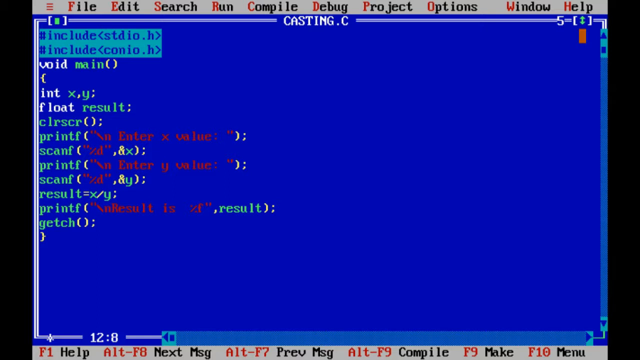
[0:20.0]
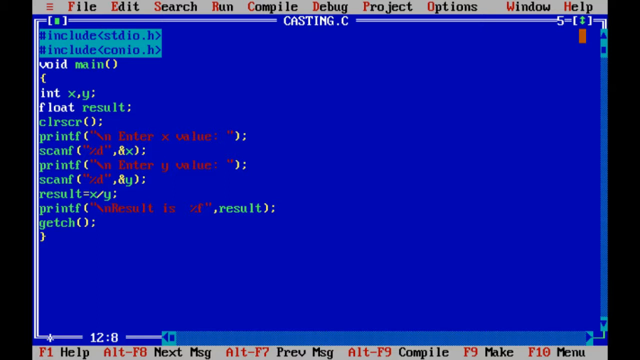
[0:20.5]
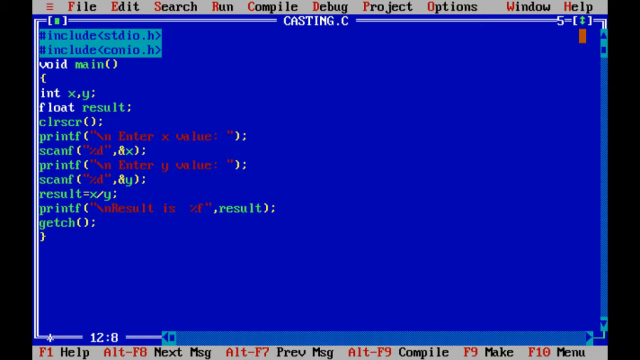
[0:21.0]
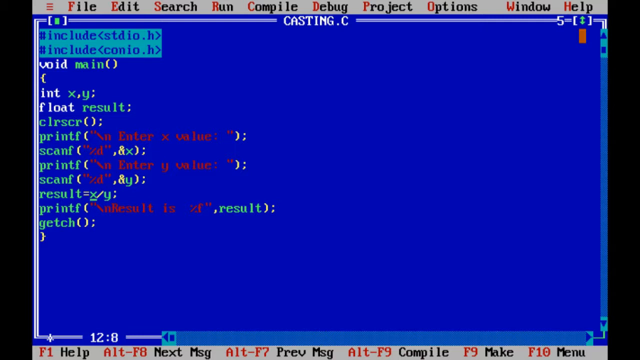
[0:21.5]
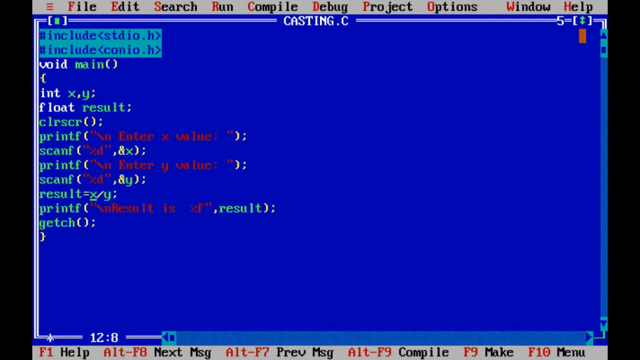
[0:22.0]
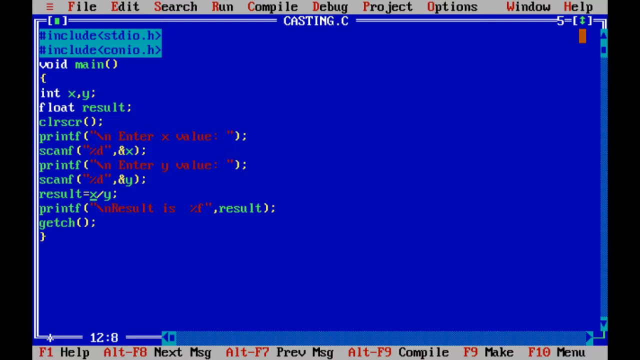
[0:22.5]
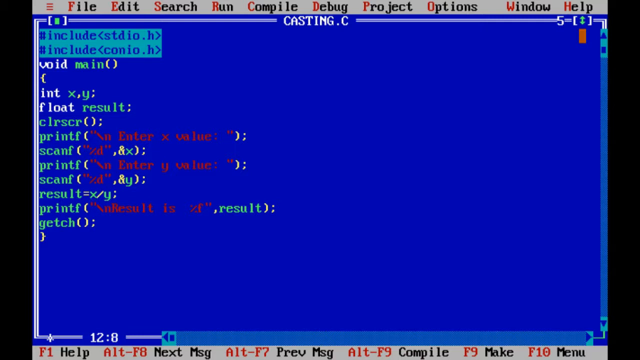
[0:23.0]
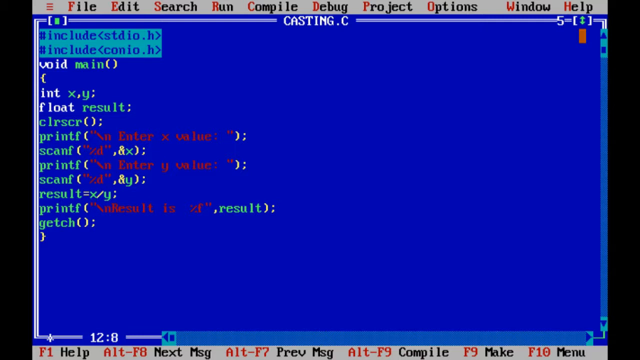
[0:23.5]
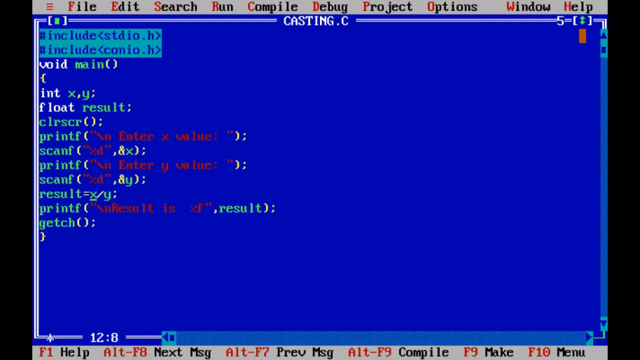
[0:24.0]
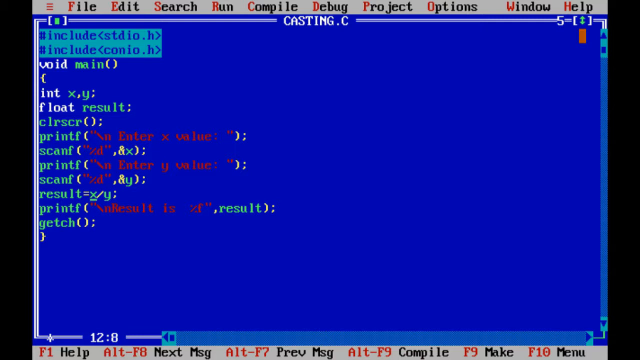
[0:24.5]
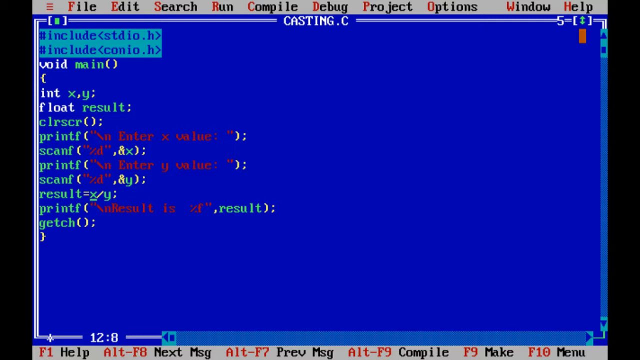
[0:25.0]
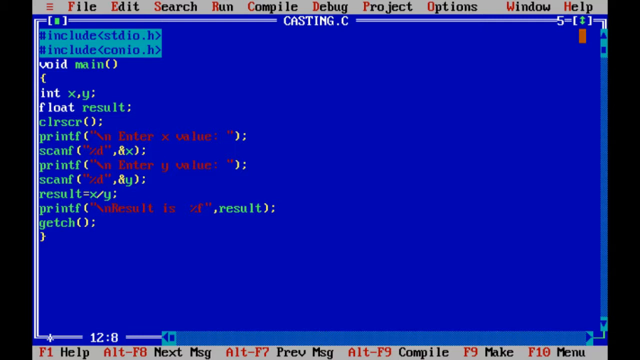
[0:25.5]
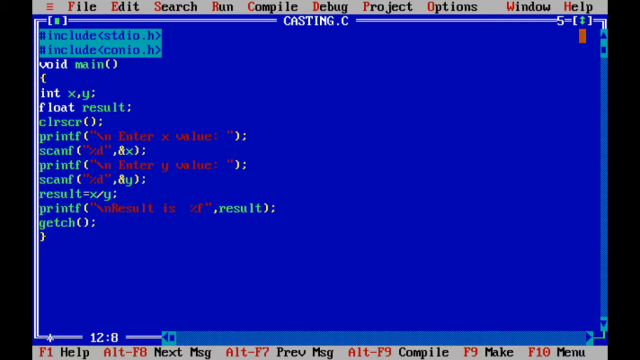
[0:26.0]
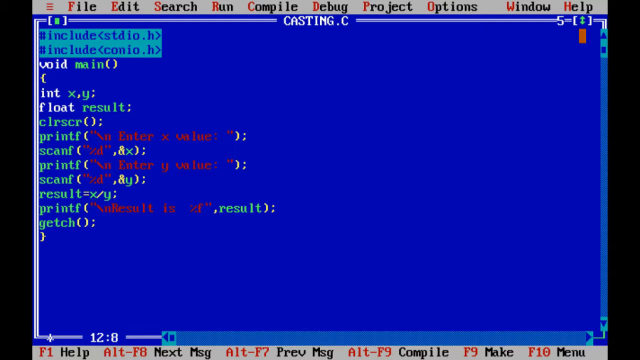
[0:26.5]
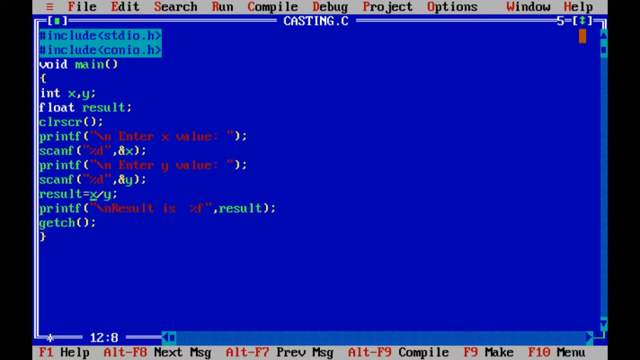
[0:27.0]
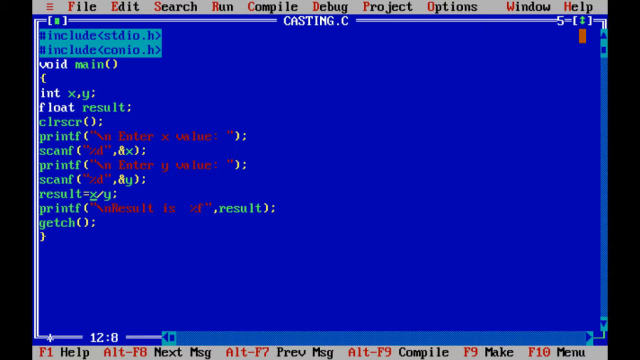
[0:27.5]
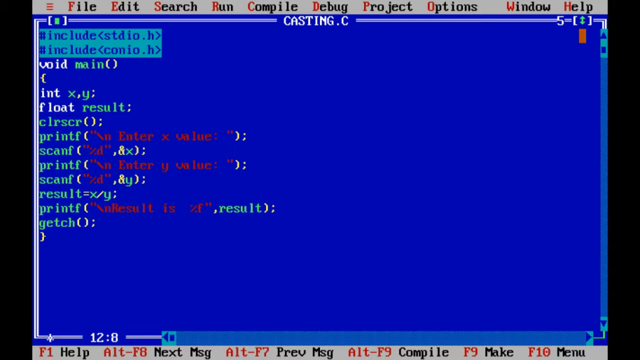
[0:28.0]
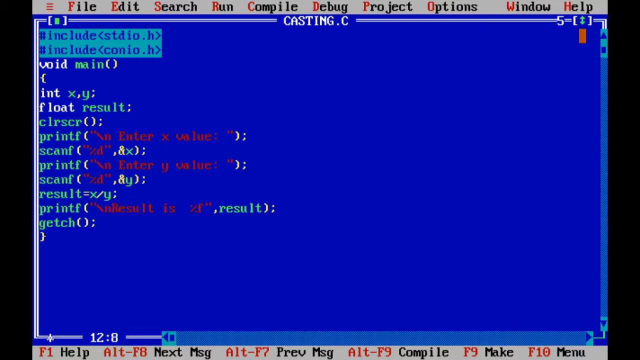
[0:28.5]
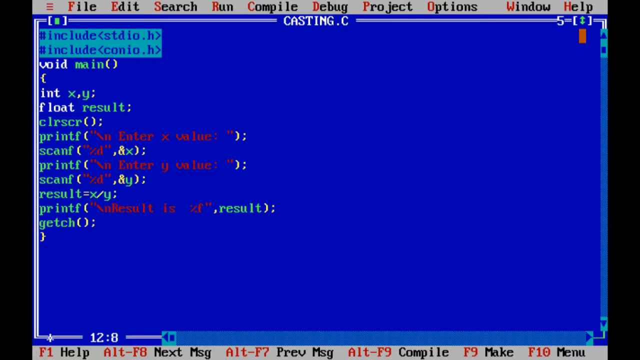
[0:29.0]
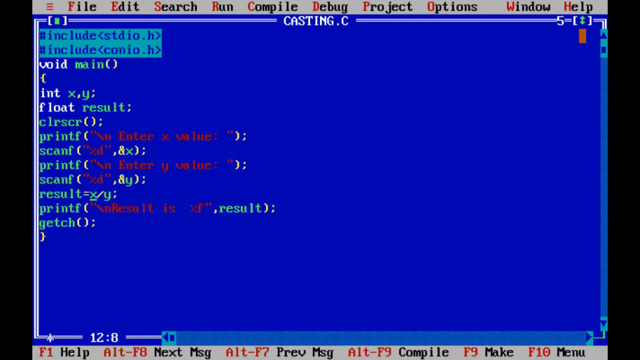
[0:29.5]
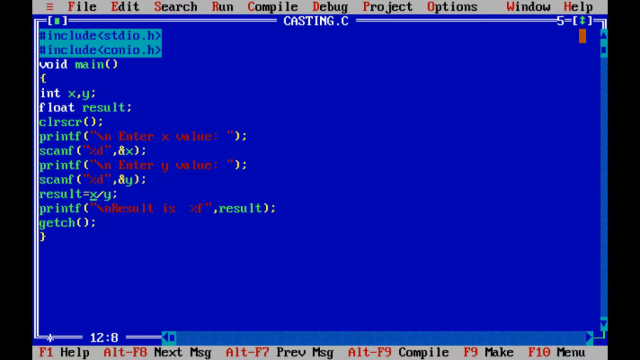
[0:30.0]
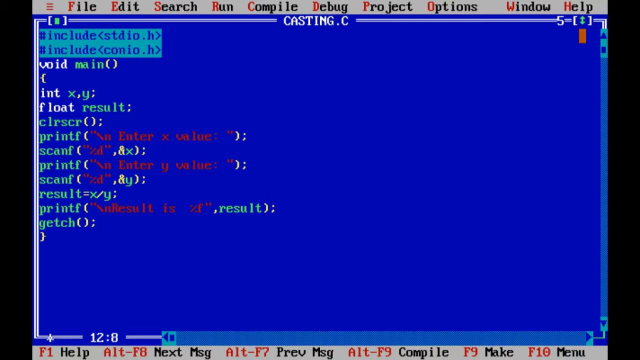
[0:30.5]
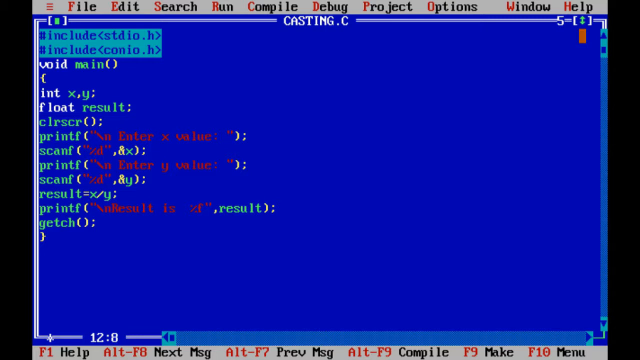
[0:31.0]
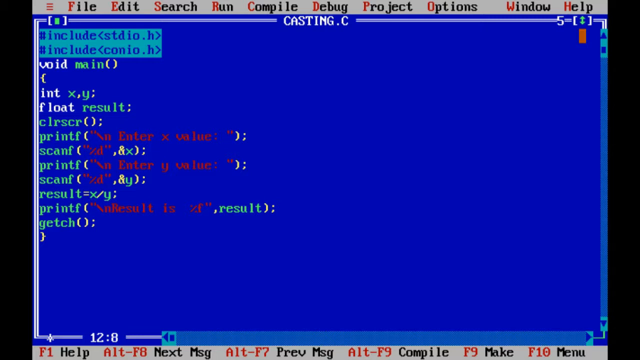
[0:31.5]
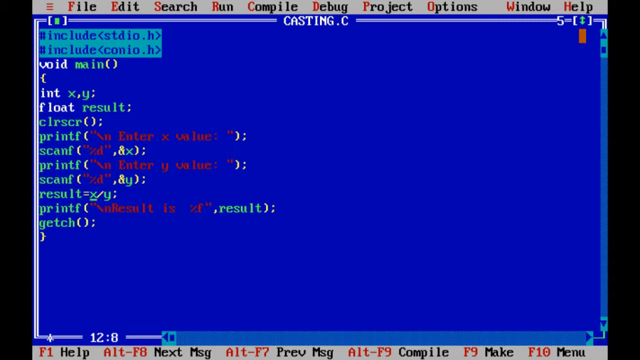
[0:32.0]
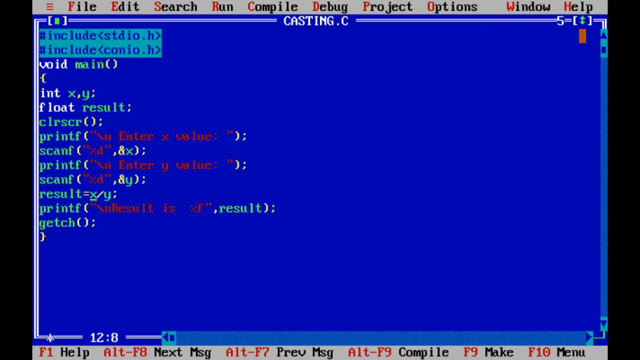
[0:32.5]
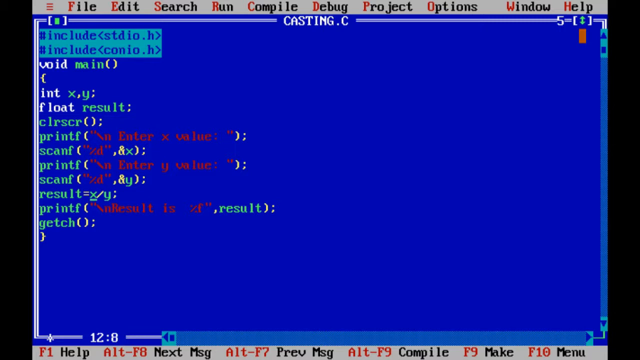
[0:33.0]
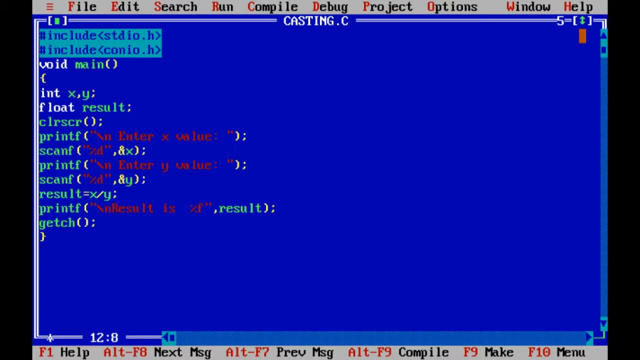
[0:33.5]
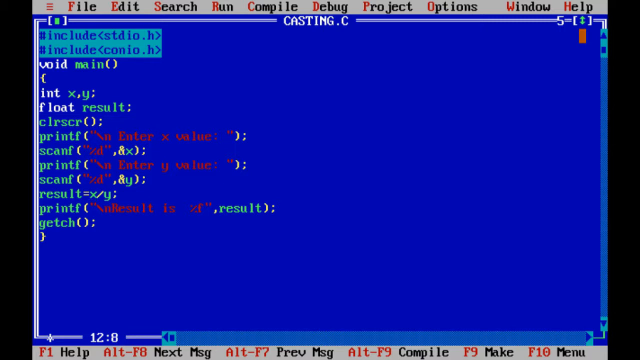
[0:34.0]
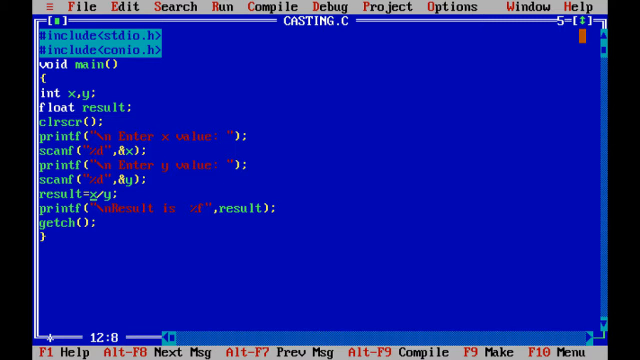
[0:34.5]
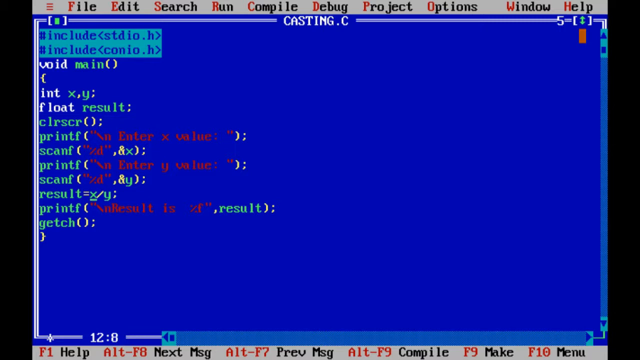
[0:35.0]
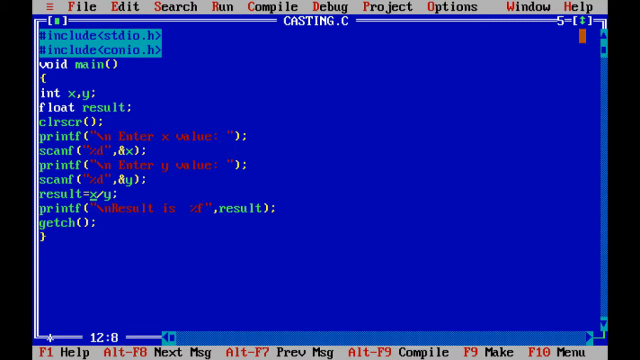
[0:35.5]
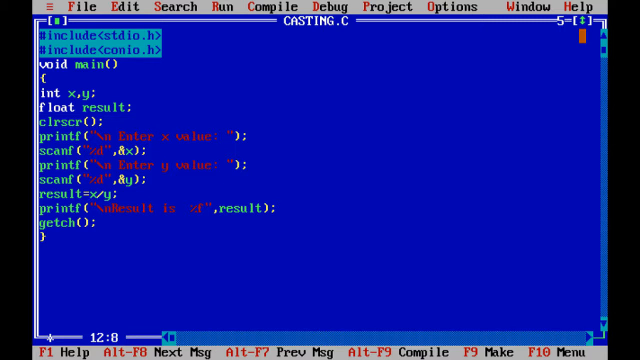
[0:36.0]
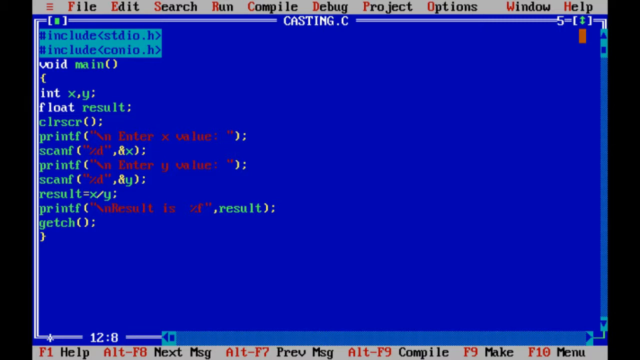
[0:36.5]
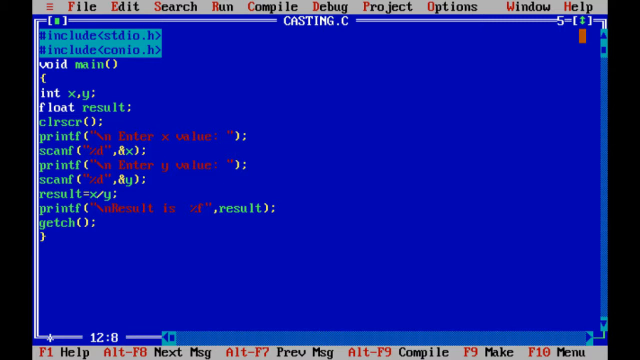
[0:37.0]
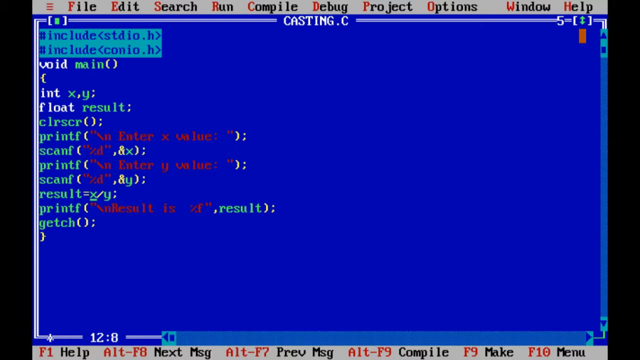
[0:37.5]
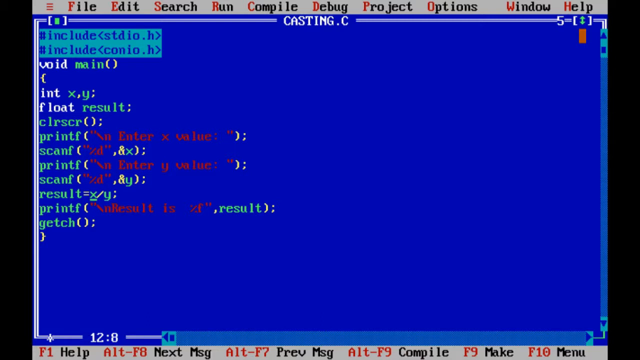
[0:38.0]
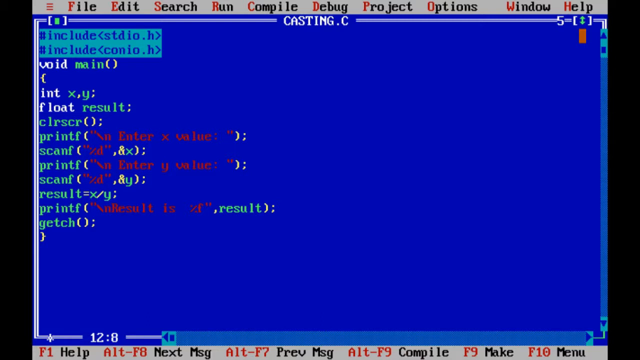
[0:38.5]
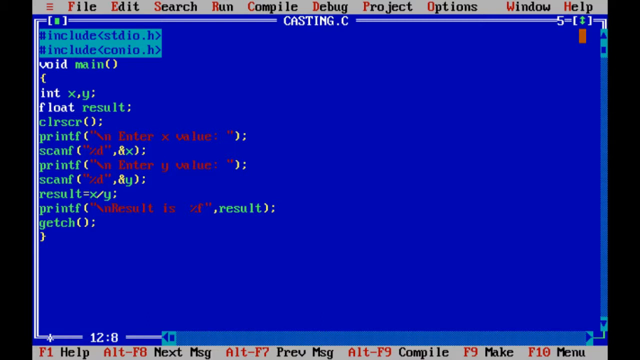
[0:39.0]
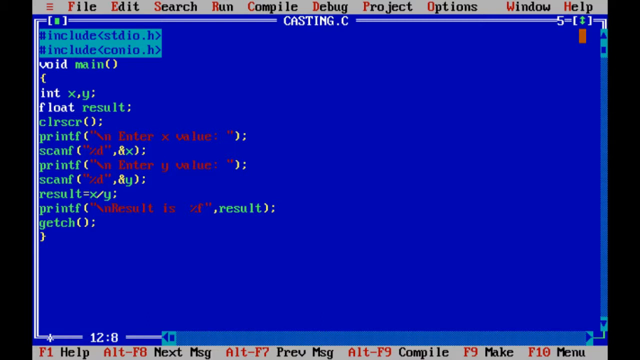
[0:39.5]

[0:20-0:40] An IDE with a blue background is on a computer screen, in a simple and quiet style. The window has header options for controlling it, such as file, edit and search, and a main body with a blue background. The window is titled "CASTING.C" and holds about 13 lines of code showing a void main function. At the very top are two lines with "#include" and angle brackets: the top one reads "stdio.h" and the bottom one "conio.h". Nothing specific happens. At the bottom is a footer with a grey background and black and red text, showing function shortcut options such as "F1 Help" and "Alt-F8 Next Msg"; the "F1" part is in red and the "Help" part in black.